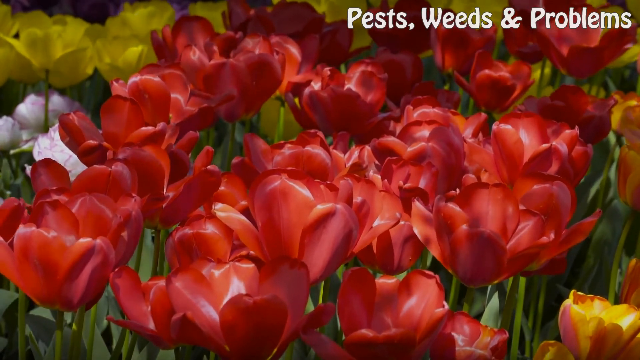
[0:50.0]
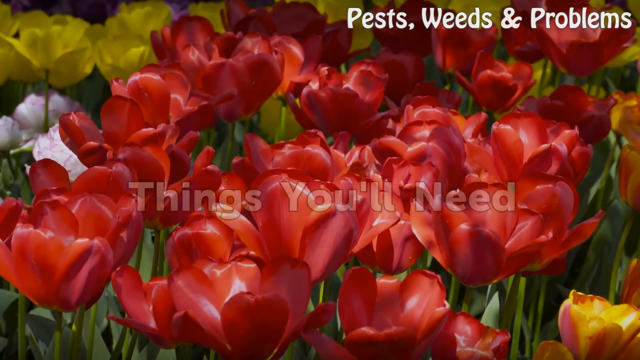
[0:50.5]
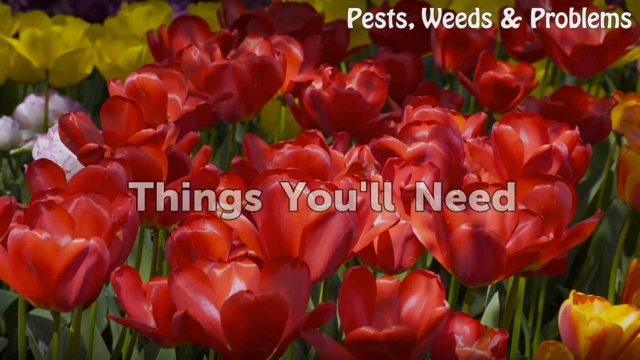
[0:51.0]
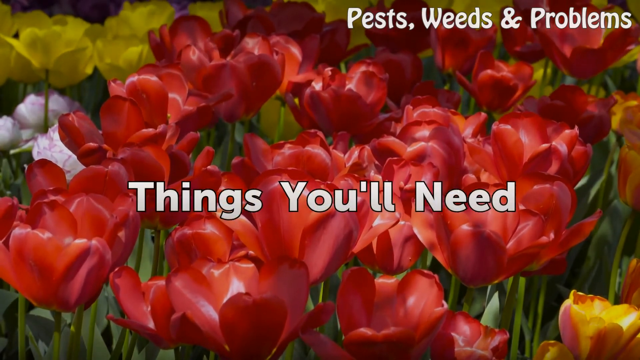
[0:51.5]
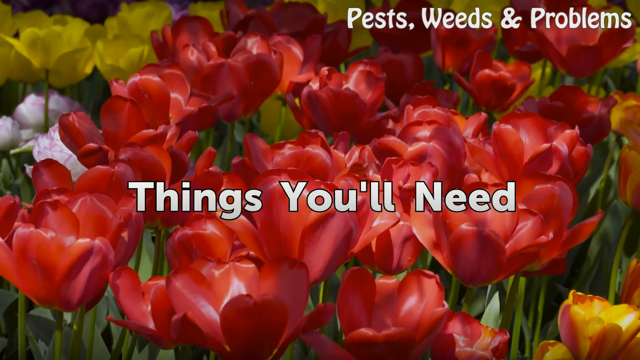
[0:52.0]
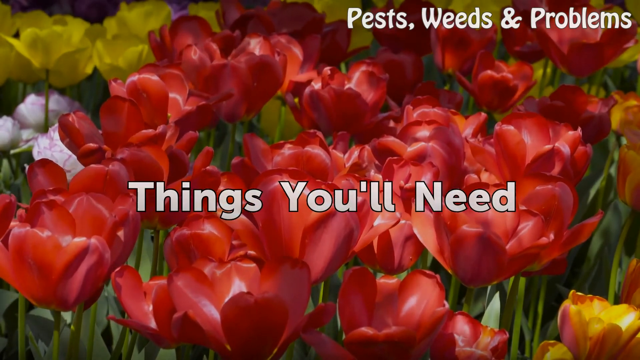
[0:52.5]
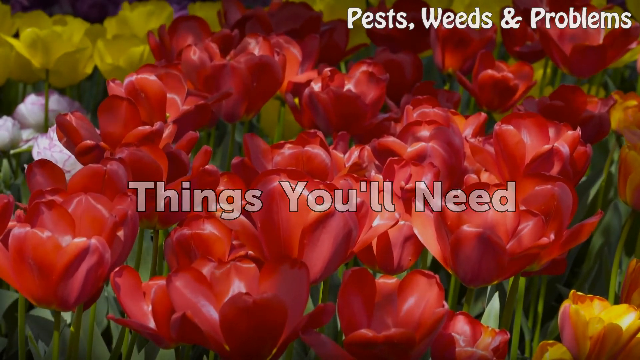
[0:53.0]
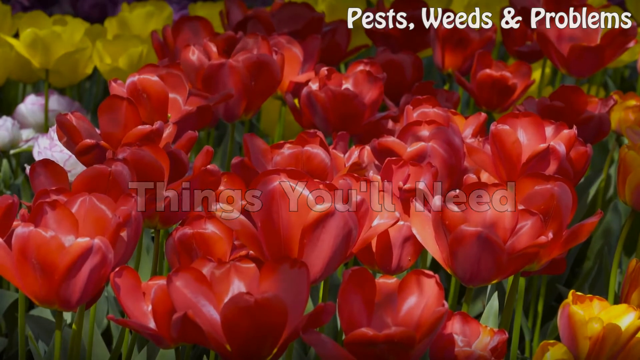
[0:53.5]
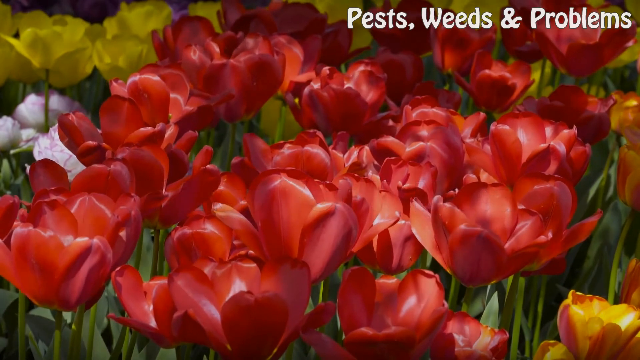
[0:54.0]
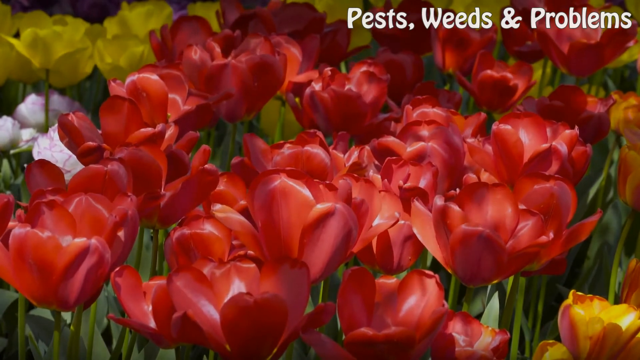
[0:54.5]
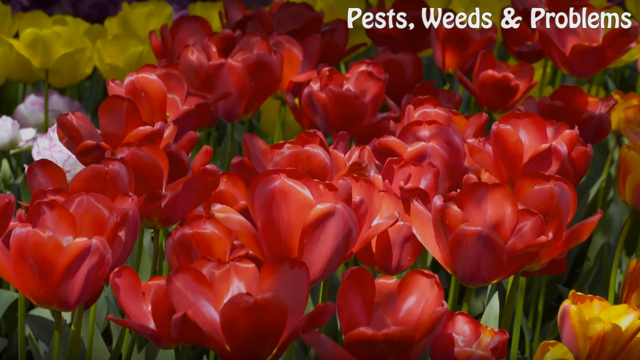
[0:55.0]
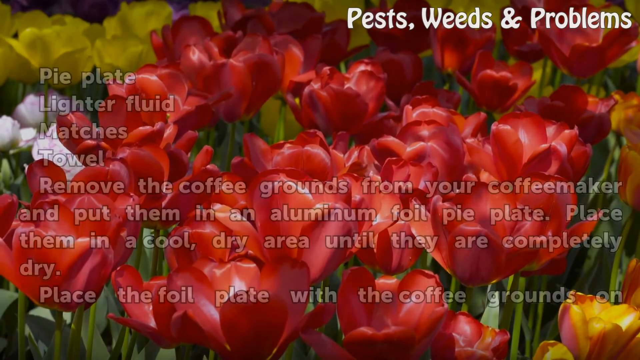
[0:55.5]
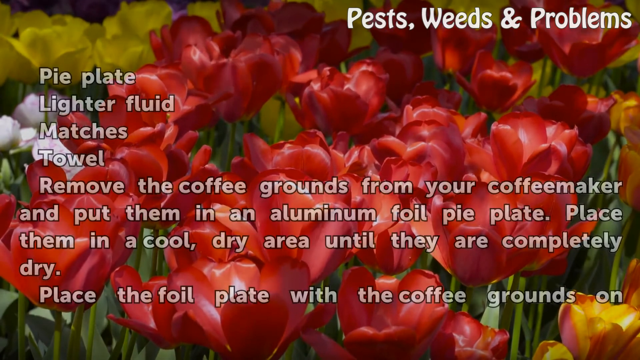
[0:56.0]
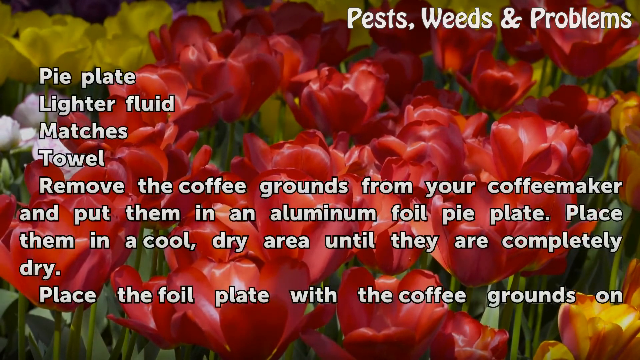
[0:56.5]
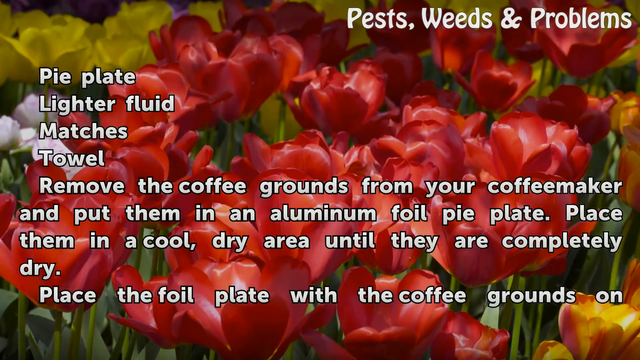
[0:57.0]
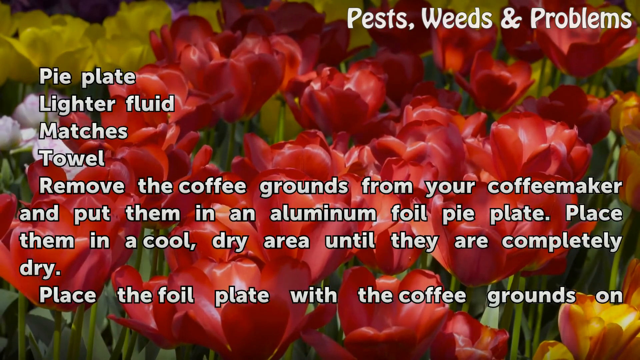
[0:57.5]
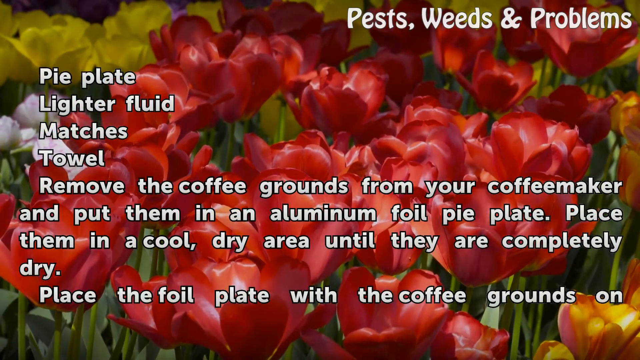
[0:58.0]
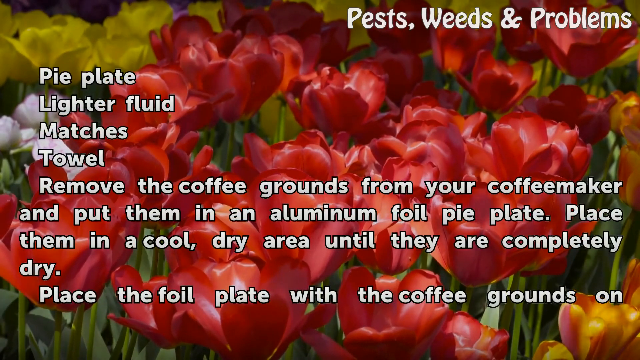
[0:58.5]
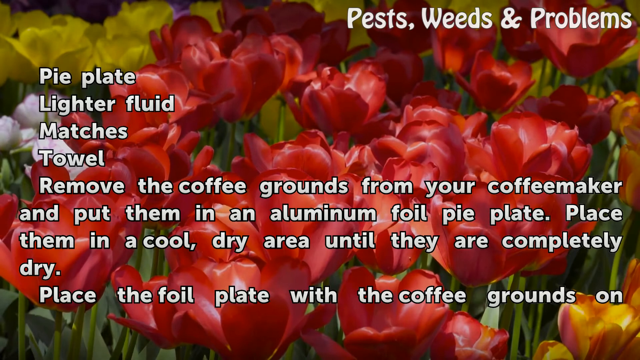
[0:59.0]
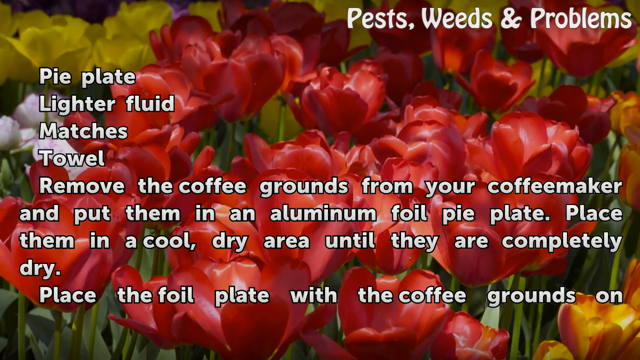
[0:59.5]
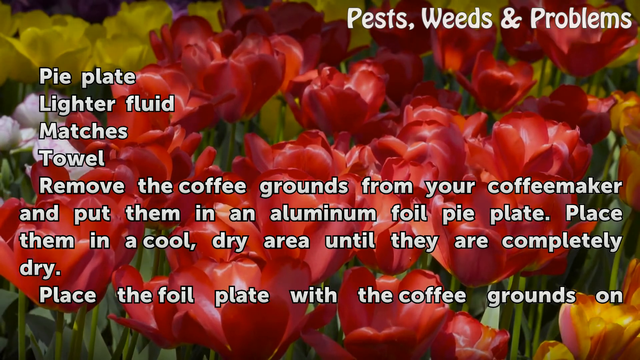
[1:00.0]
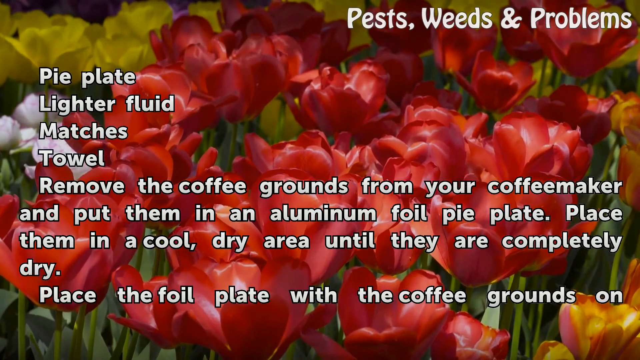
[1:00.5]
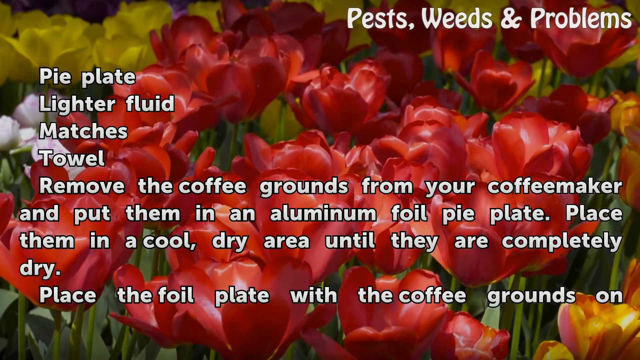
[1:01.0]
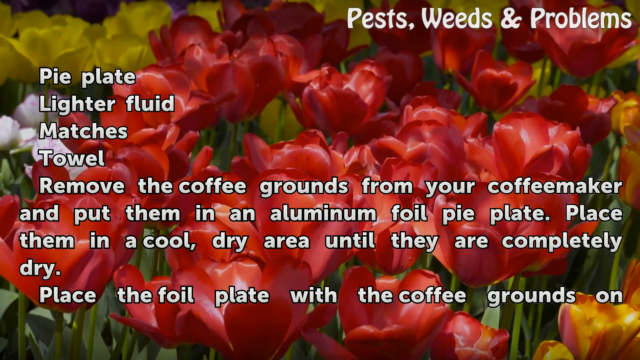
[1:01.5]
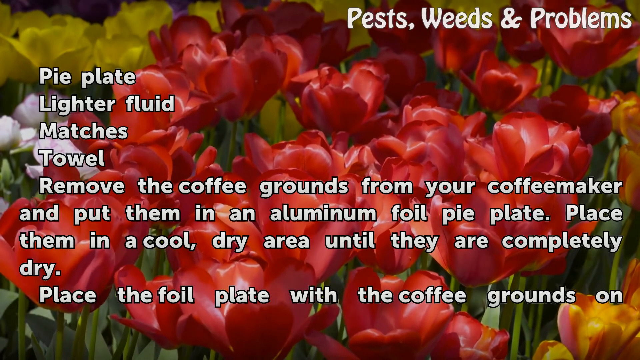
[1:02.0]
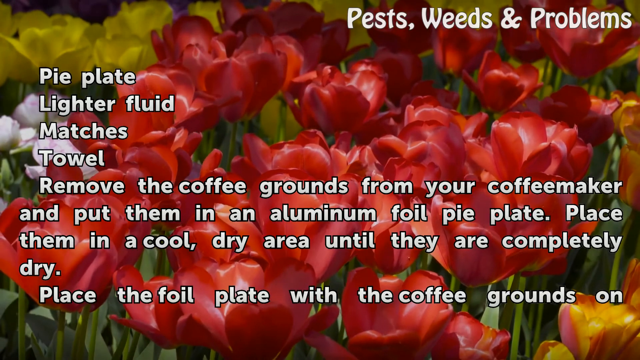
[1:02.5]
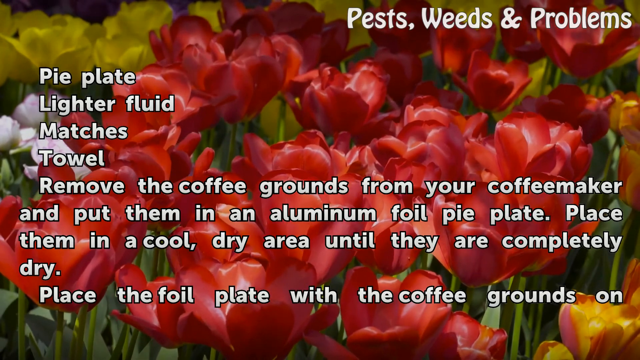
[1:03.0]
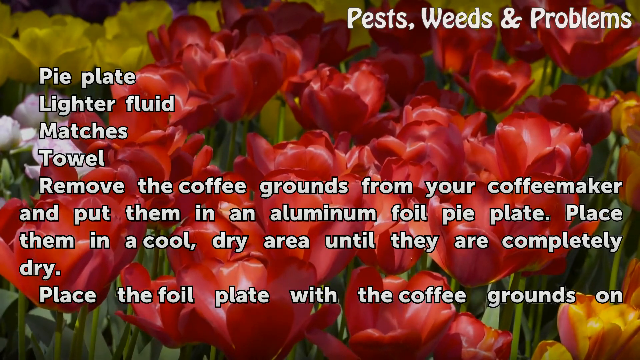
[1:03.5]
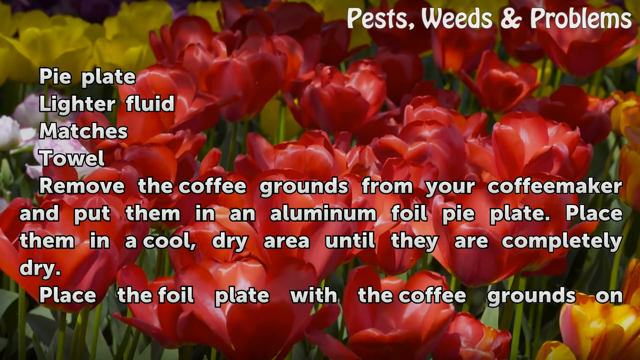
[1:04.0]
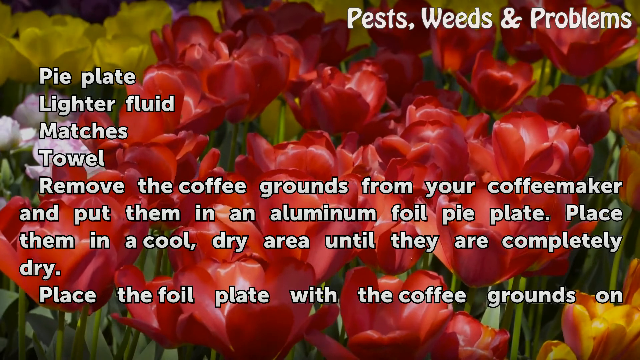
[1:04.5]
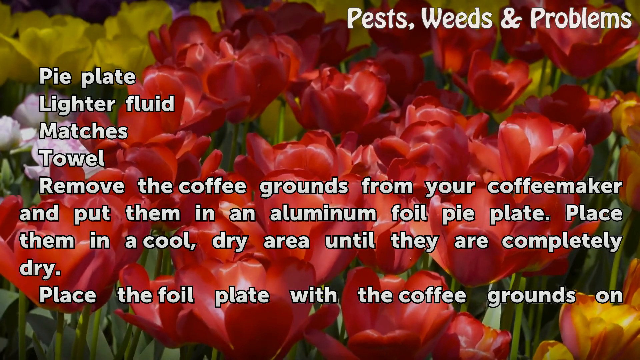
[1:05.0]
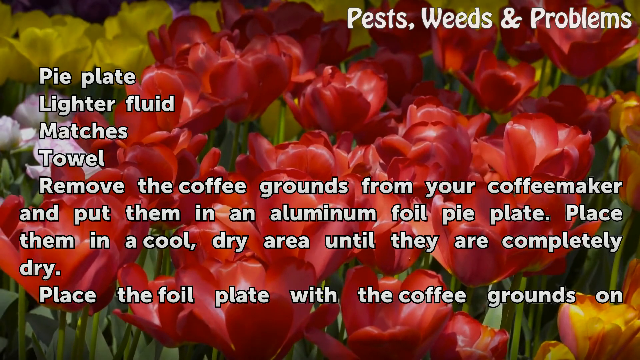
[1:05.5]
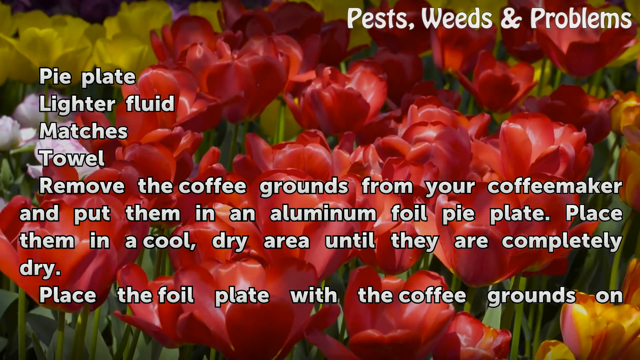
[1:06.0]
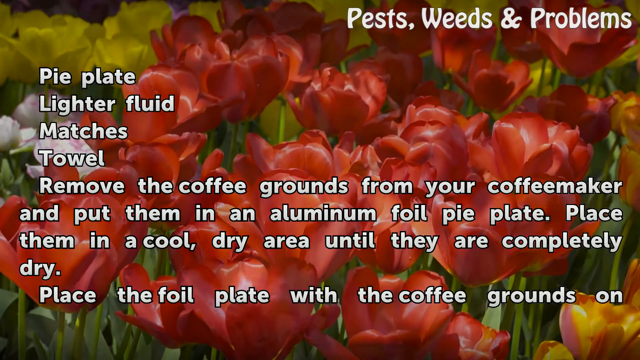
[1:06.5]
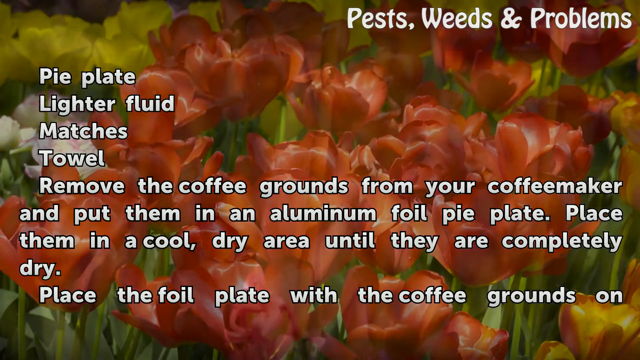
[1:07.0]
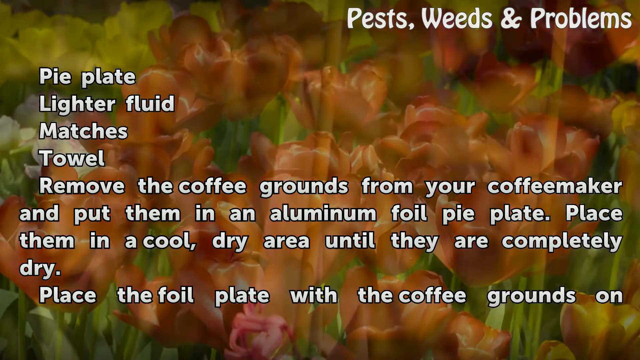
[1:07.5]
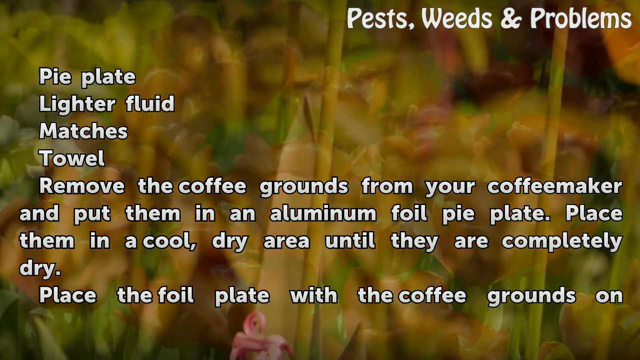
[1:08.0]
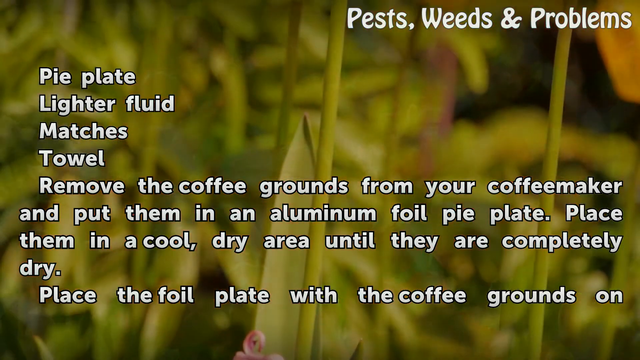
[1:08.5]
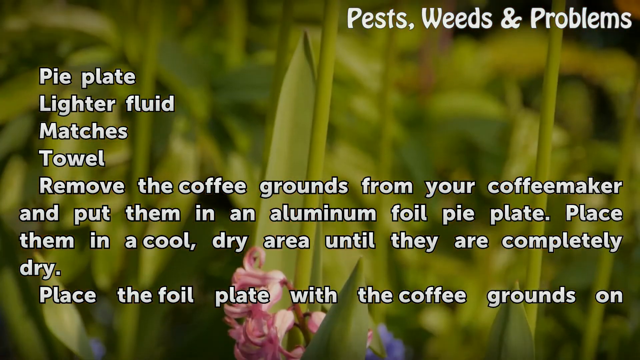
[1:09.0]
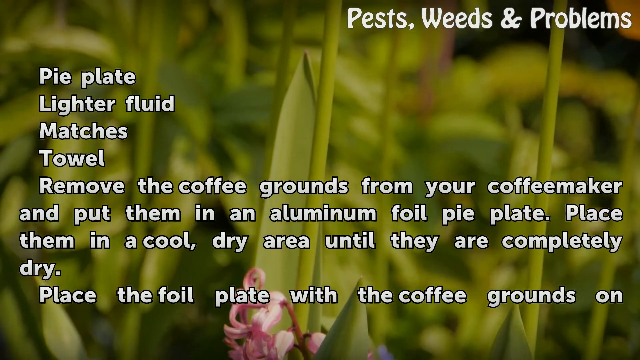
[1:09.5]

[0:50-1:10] The flowers look like they are swaying slightly in the breeze. White text appears across the screen reading "things you'll need," then fades away. Next, white text lists the items: "pie plate," "lighter fluid," "matches" and "towel." Then the text reads: "remove the coffee grounds from your coffee maker and put them in an aluminum foil pie plate. Place them in a cool dry area until they are completely dry. Place the foil plate with the coffee grounds on," and cuts off at that point. The text stays on screen with the flowers still in the background. Each flower has a thin green stalk going up to it, and at the bottom and all behind the flowers there is a lot of green, with many vertical stems between the flowers. The background image then fades away and is replaced with a new image.